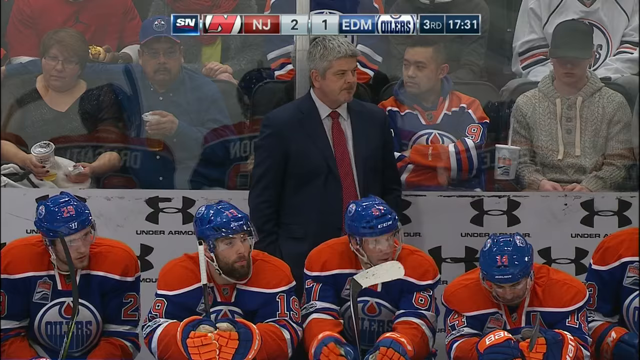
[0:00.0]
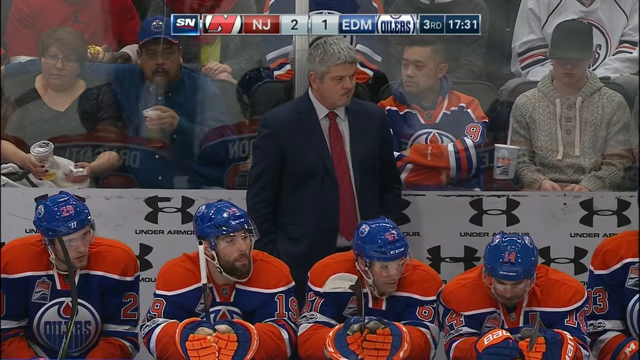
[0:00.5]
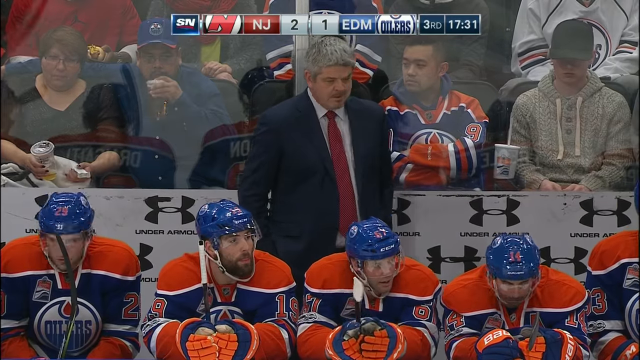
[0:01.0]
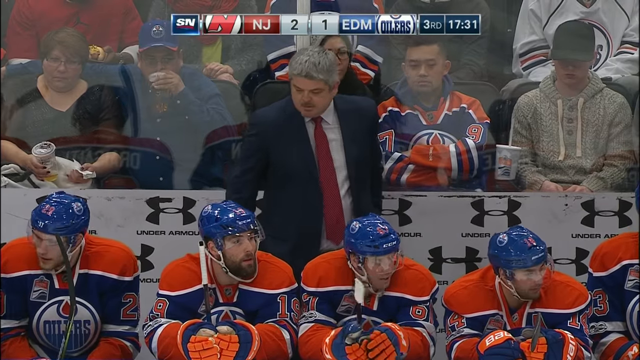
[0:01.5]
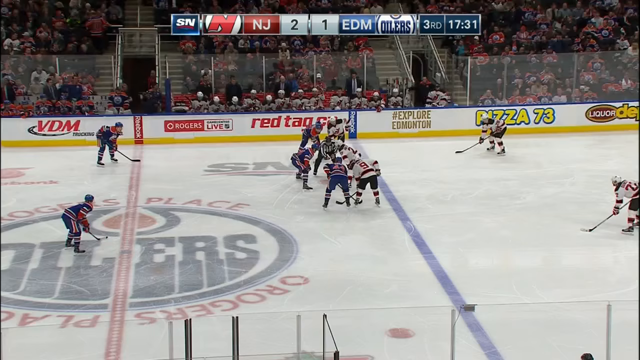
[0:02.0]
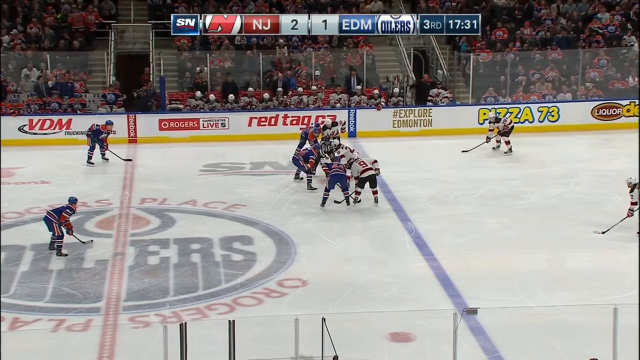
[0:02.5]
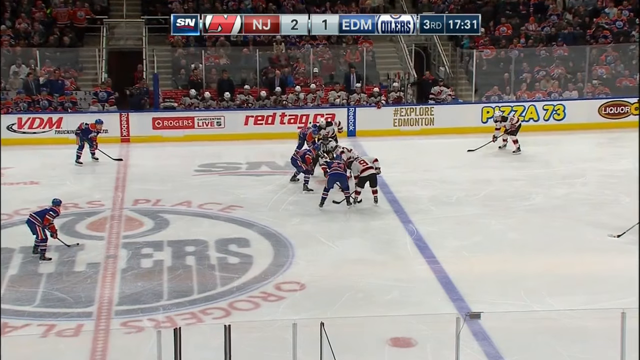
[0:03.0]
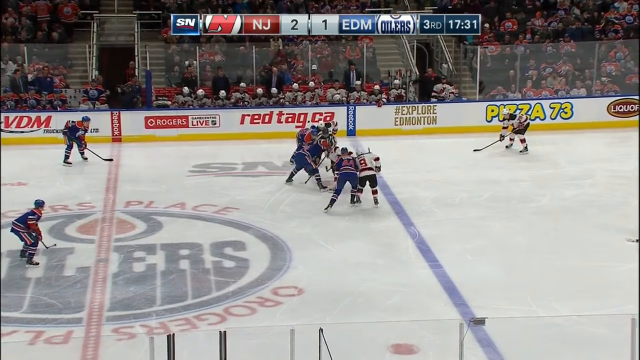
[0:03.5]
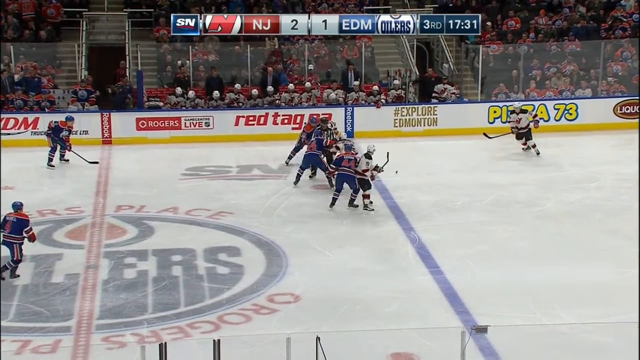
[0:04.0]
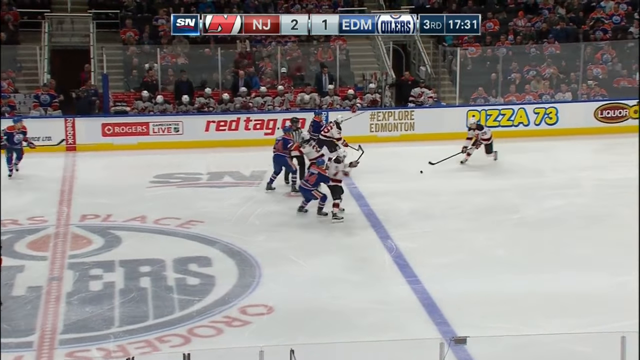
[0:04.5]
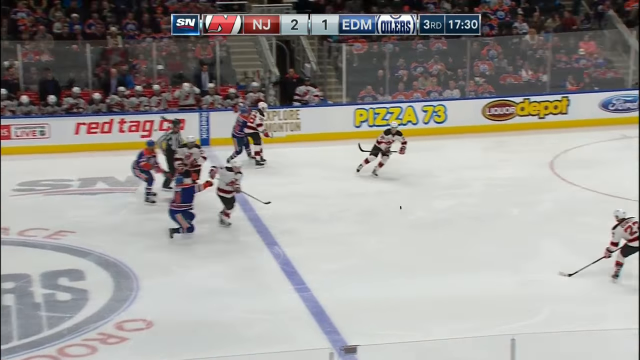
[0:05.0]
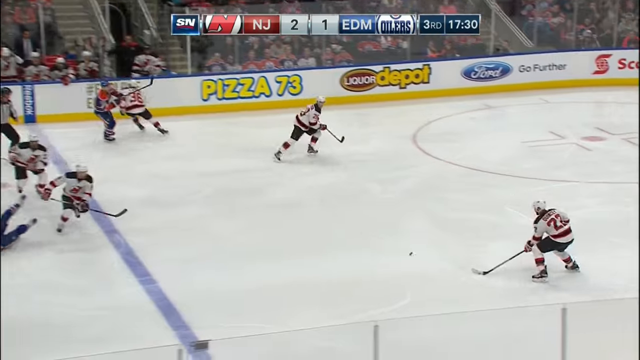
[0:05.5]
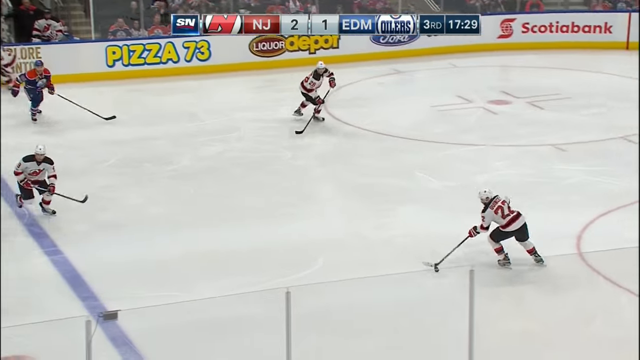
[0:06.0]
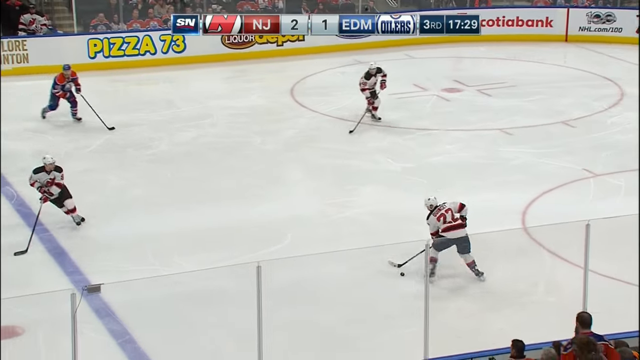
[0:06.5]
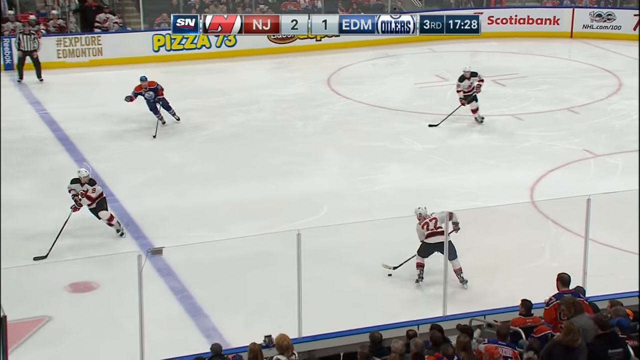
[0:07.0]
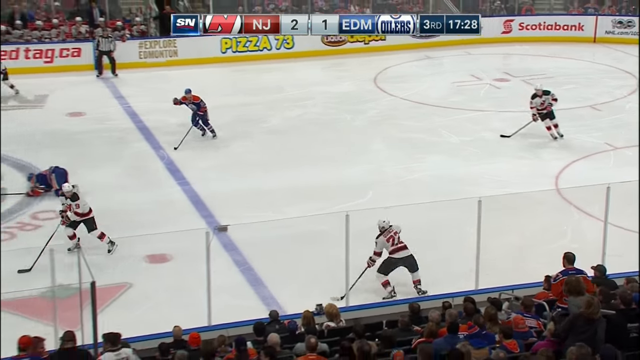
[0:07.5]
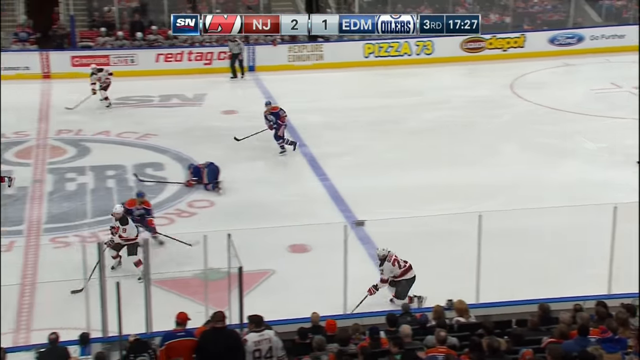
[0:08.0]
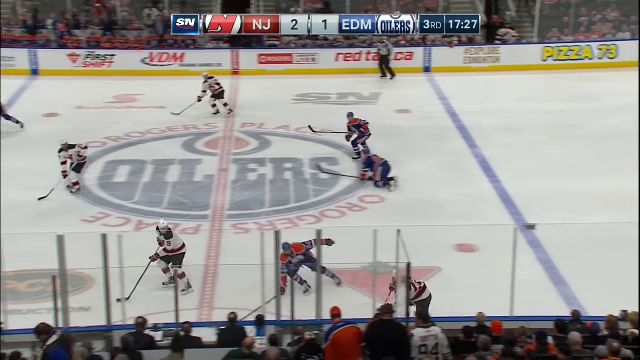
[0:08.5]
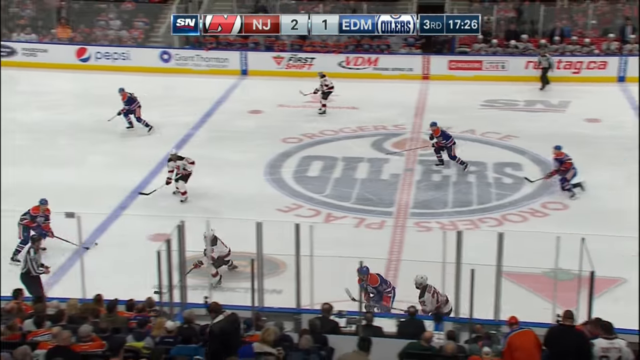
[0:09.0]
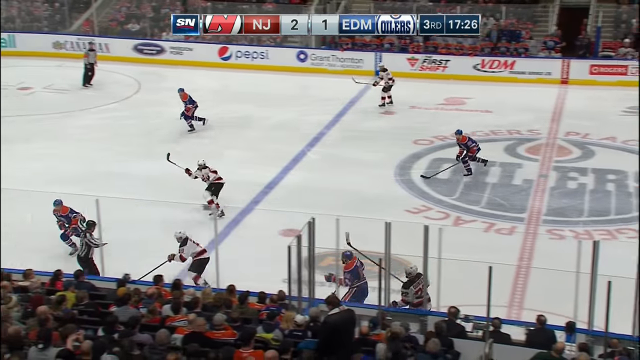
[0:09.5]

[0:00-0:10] Two hockey teams, the New Jersey Devils and the Edmonton Oilers, play each other on an ice rink in a high-definition NHL broadcast. Both teams get into a big brawl. A big Oilers player punches one of the Devils in the face, and then the whole team gets into it, with sticks in the air. Four referees come in to break it up. Afterward, the Oilers player is in the box.